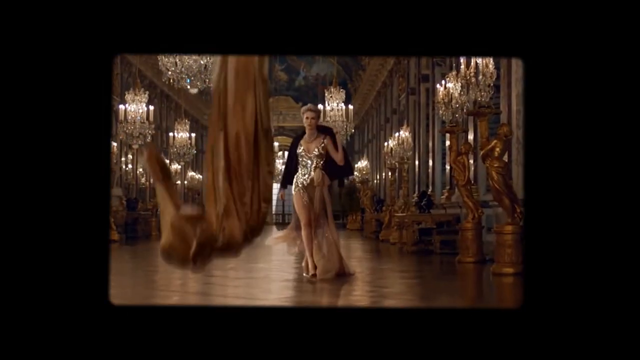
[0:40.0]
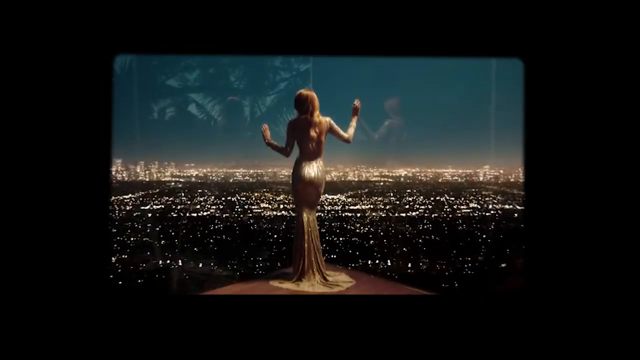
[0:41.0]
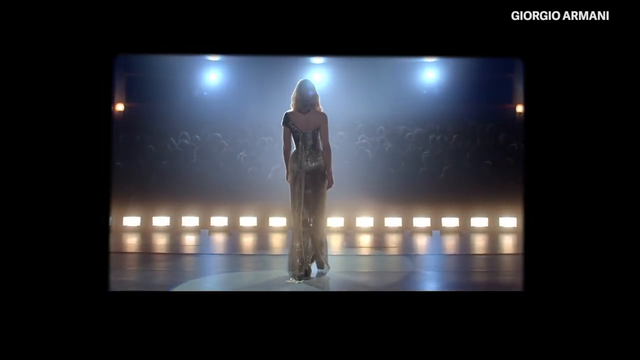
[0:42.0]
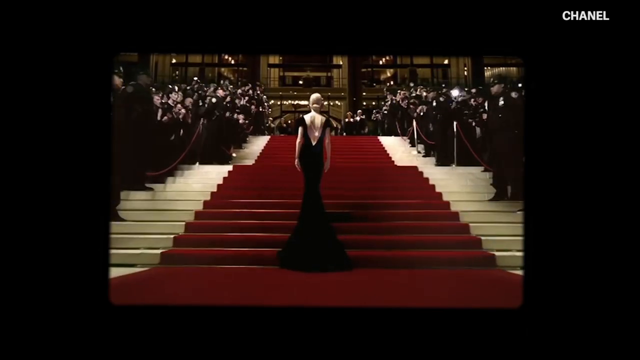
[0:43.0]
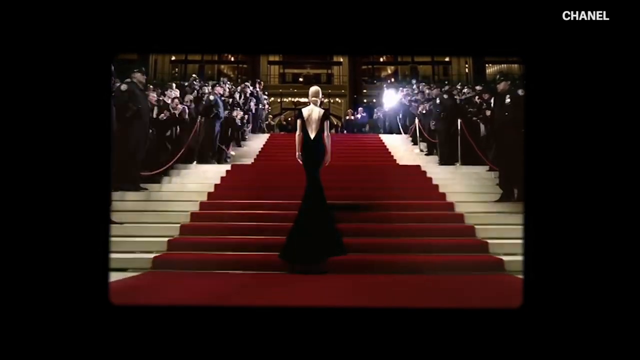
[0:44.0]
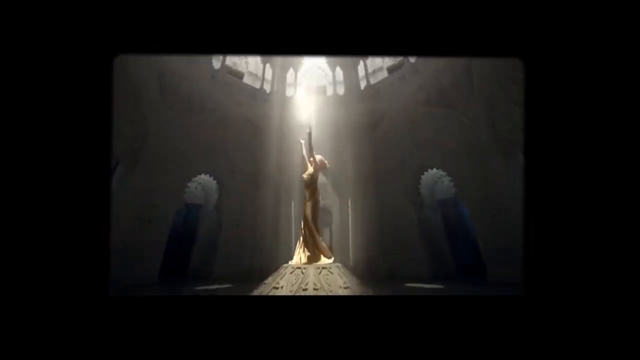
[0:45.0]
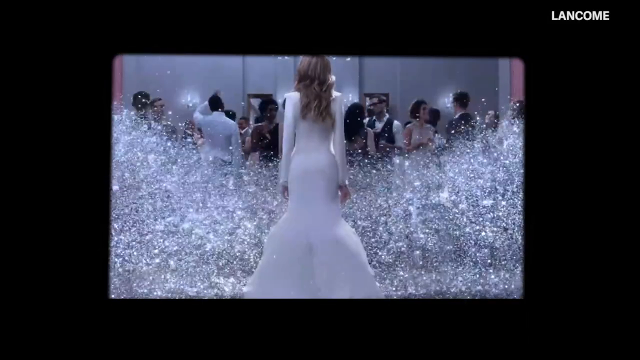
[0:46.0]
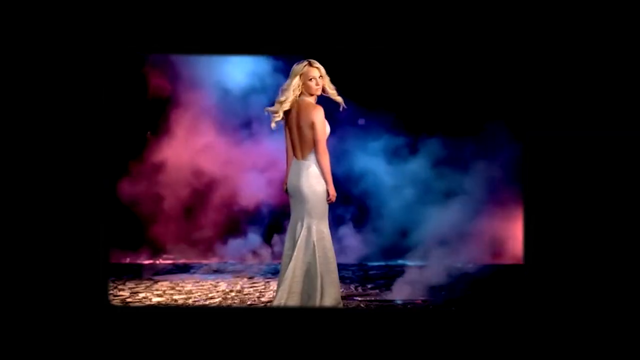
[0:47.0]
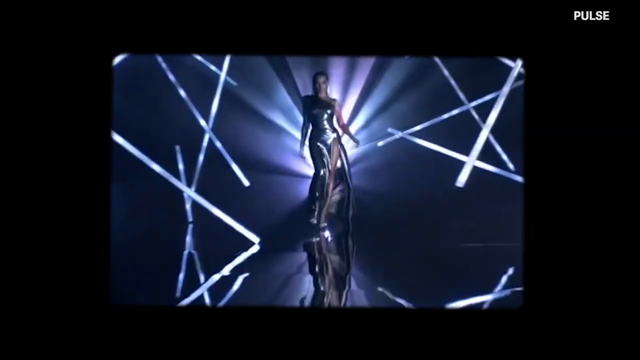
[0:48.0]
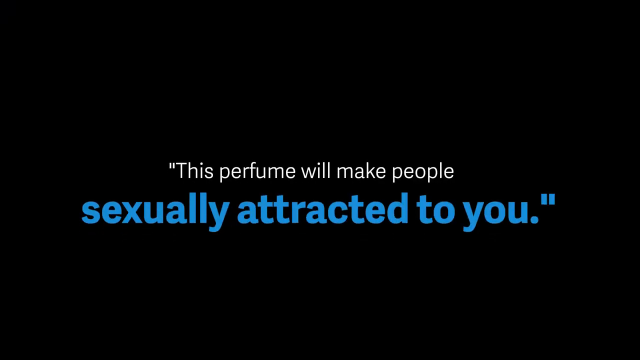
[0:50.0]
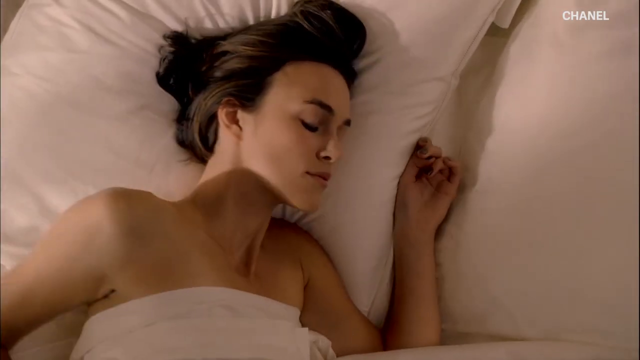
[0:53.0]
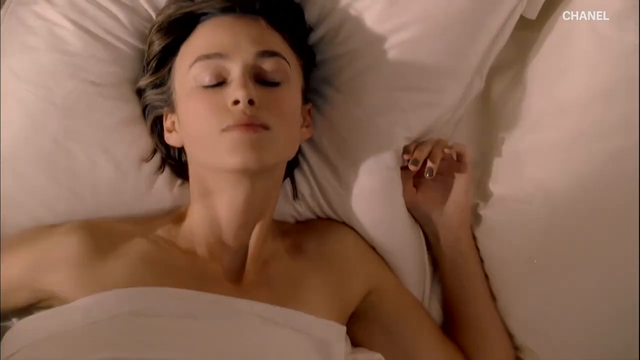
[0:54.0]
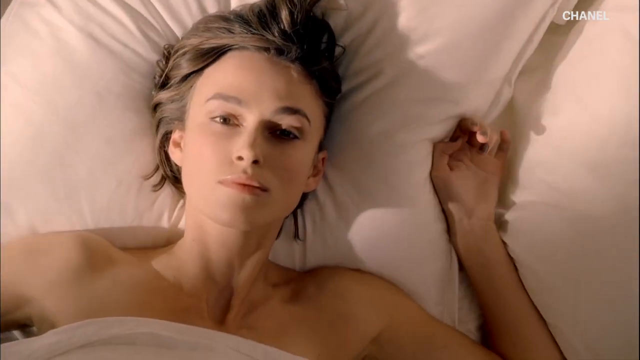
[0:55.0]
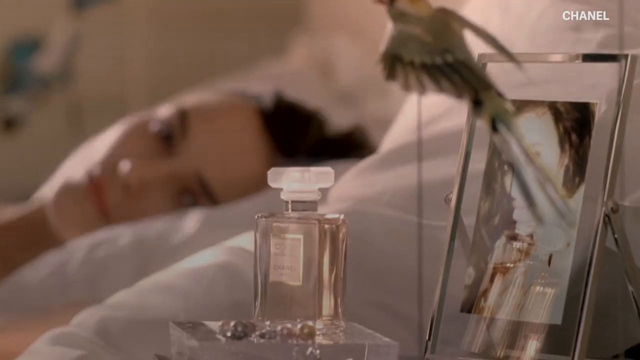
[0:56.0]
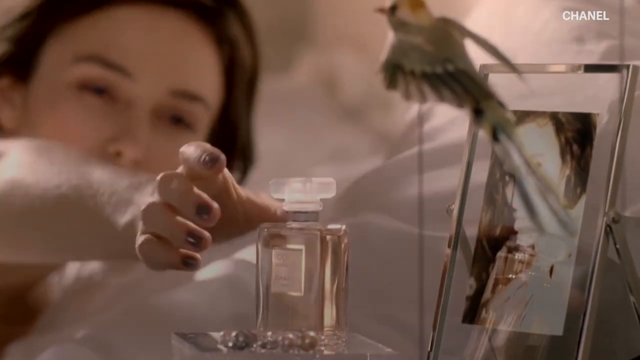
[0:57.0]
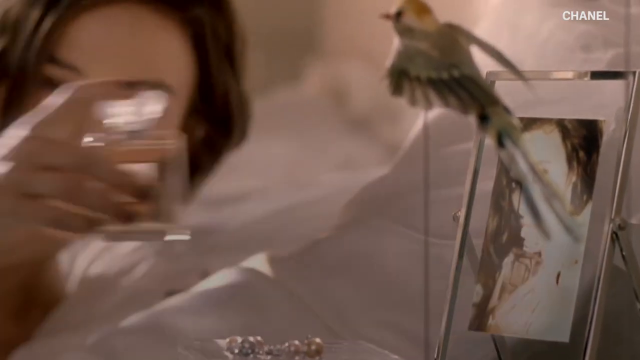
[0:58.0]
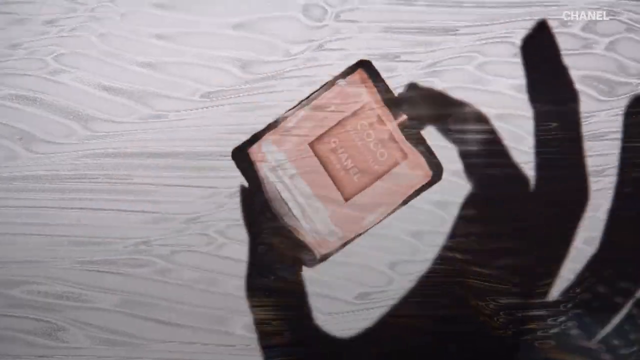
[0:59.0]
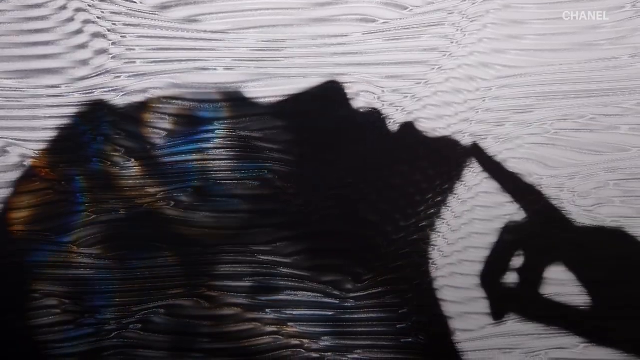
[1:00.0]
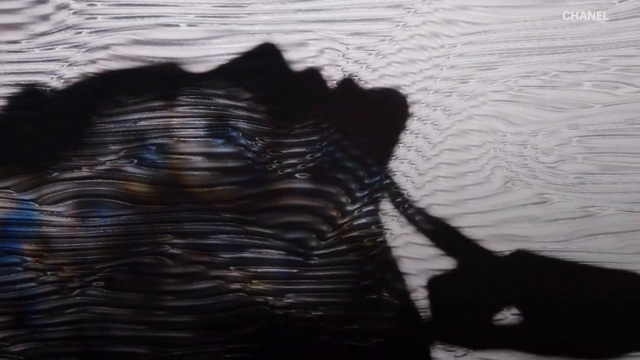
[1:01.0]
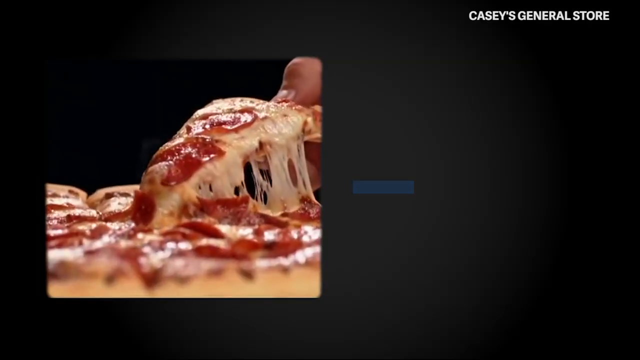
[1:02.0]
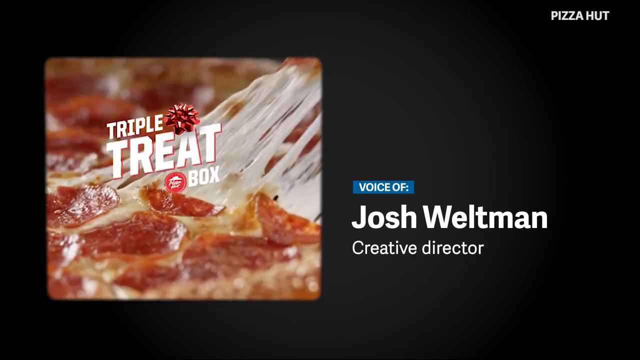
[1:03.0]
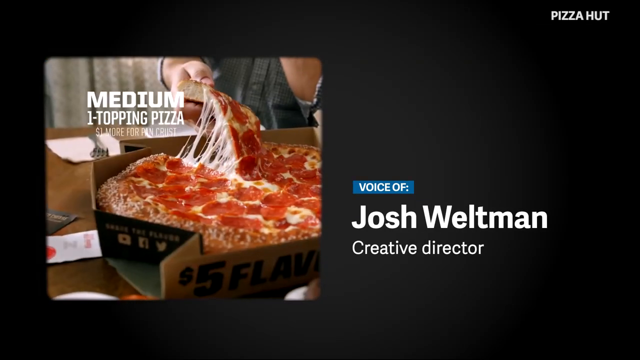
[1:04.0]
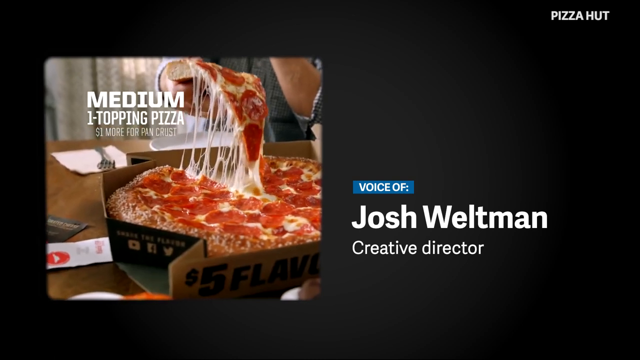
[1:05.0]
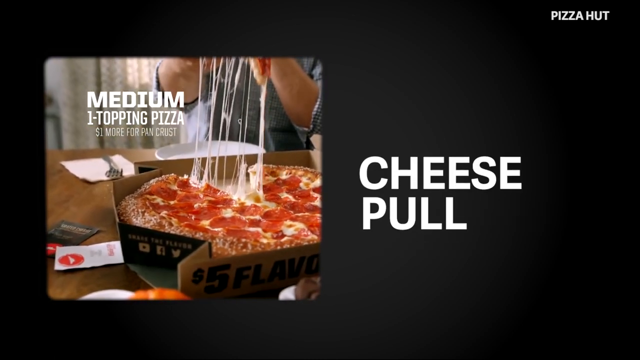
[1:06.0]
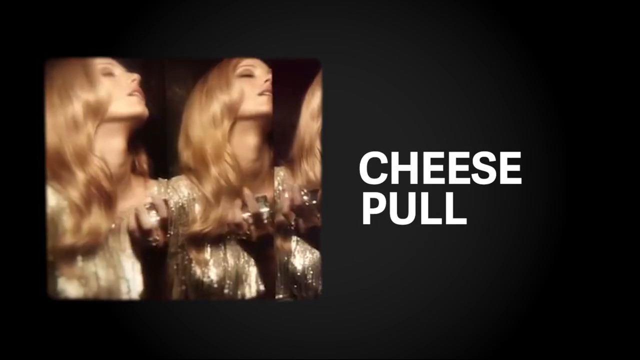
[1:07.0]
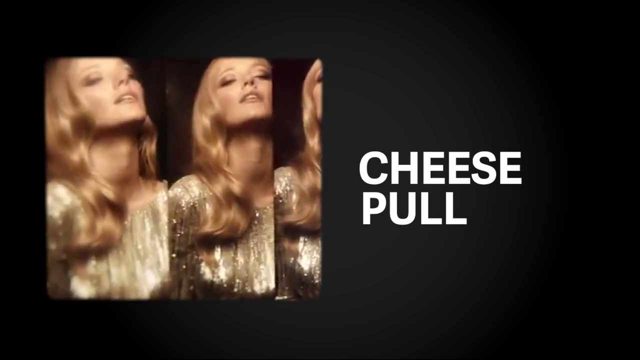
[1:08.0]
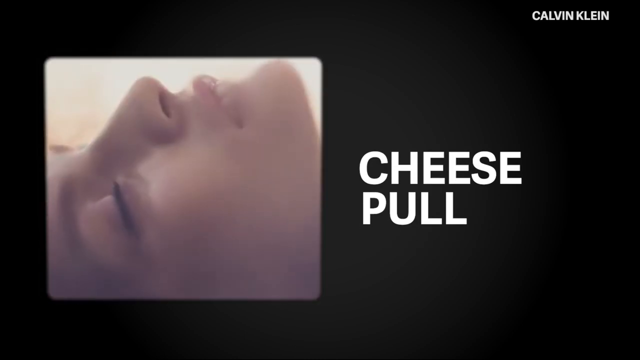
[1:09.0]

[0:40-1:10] A woman wears what looks like a gold dress, with gold everywhere in an interior reminiscent of late-1800s high society. Another celebrity appears, then the backs of celebrities in dresses are shown as they walk out. One is on a red carpet, with "Chanel" in the upper right-hand corner; she wears a black dress while people take pictures, and they turn around. A brand called Pulse appears. White text reads "this perfume will make people," and beneath it in blue, "sexually attracted to you," presented as a quote. People roll over in bed, look at the perfume and grab it, and people in the shower put it on. A Pizza Hut commercial follows, with text reading "voice of Josh Weltman, creative director," as pizza is lifted up on the left-hand side.